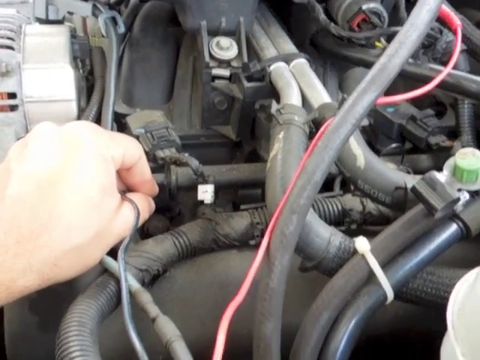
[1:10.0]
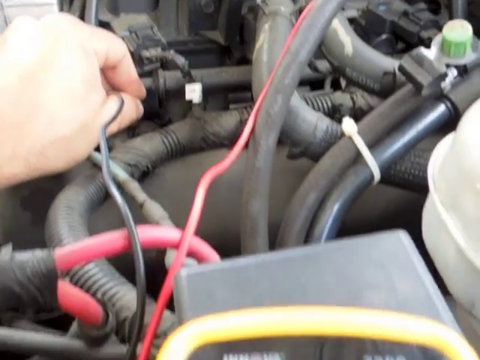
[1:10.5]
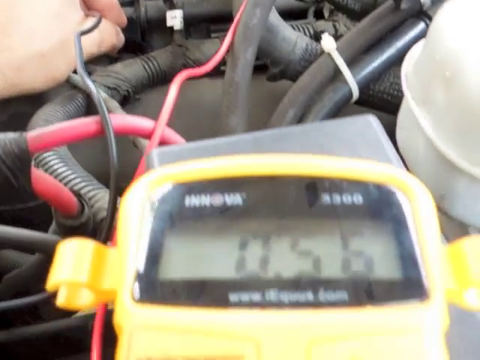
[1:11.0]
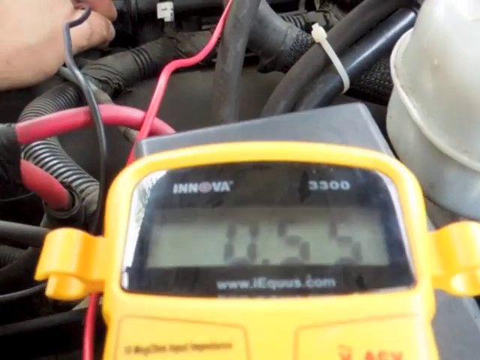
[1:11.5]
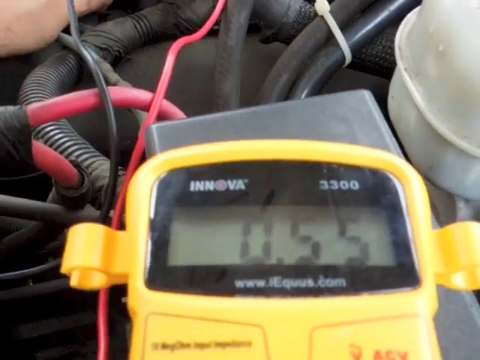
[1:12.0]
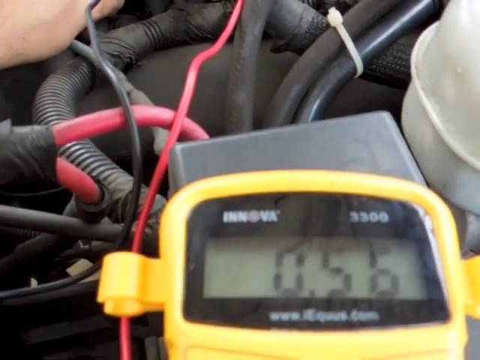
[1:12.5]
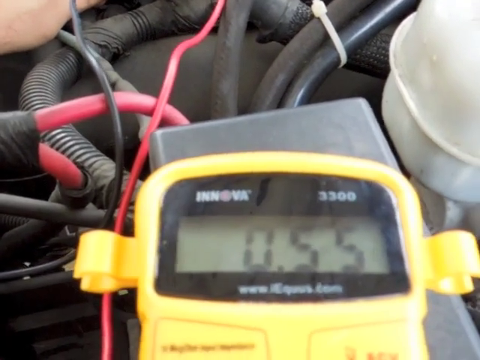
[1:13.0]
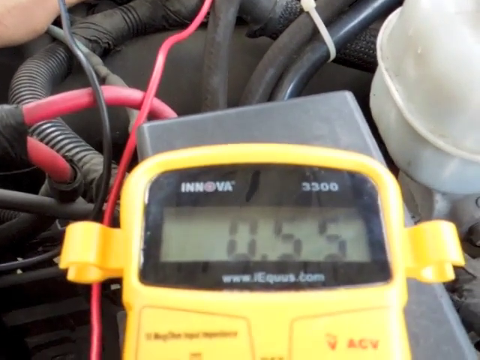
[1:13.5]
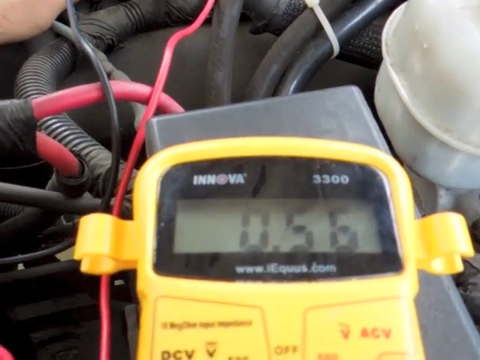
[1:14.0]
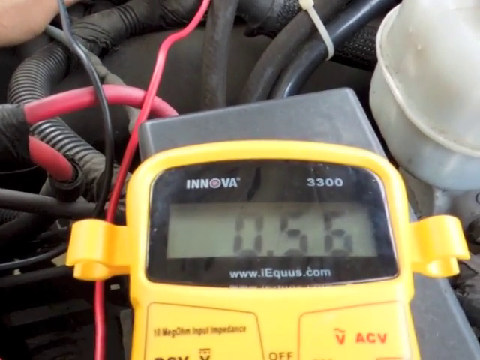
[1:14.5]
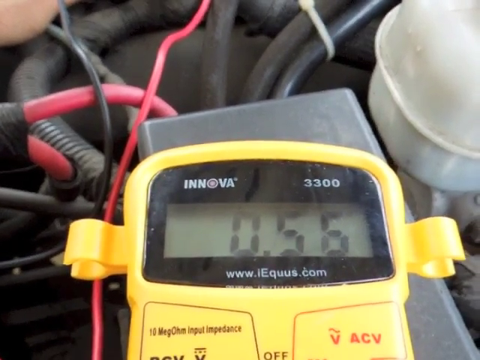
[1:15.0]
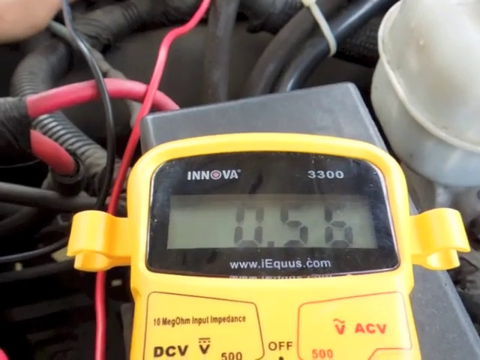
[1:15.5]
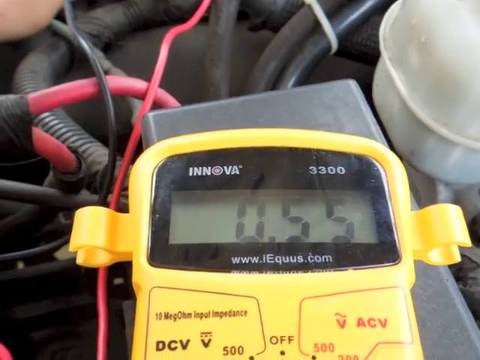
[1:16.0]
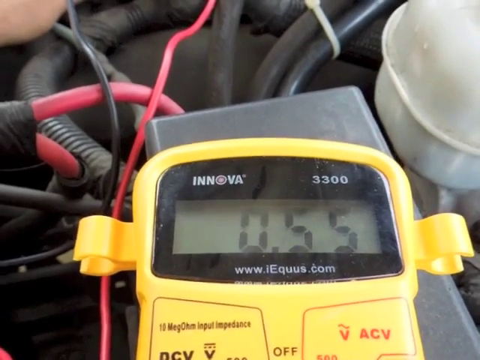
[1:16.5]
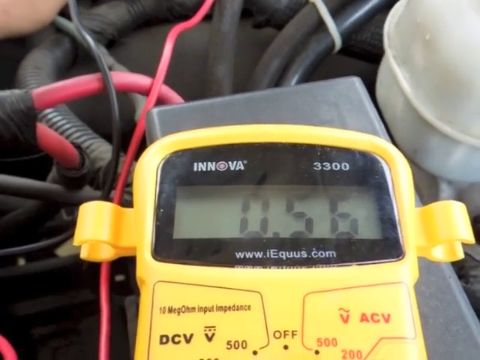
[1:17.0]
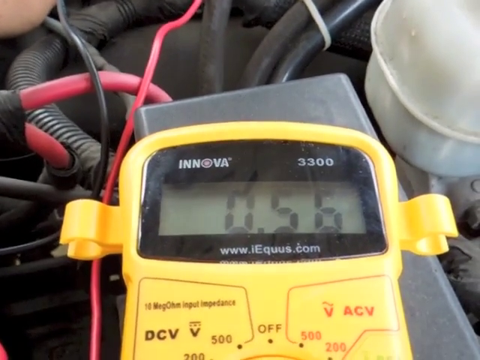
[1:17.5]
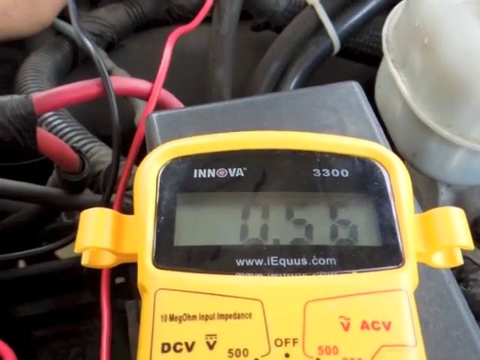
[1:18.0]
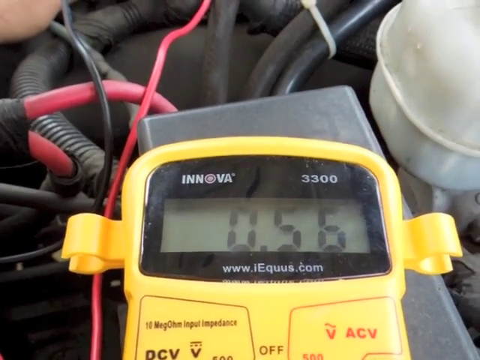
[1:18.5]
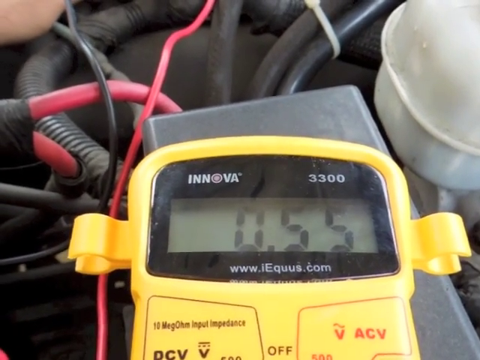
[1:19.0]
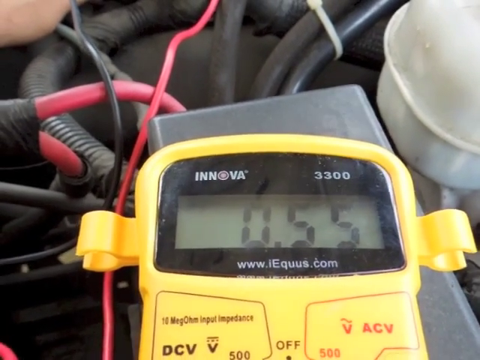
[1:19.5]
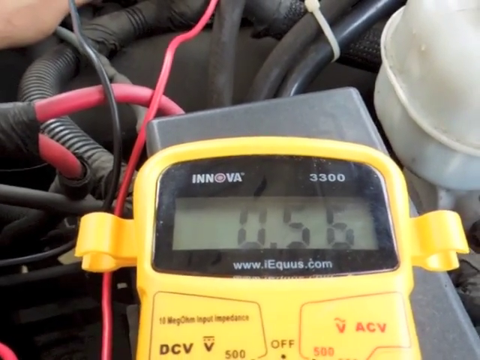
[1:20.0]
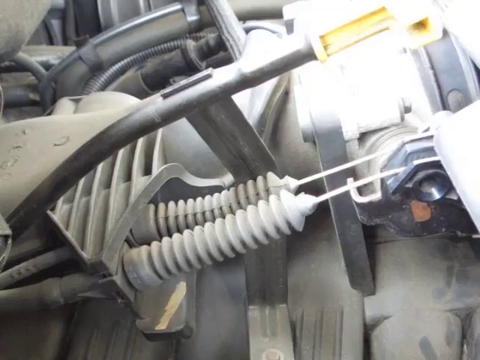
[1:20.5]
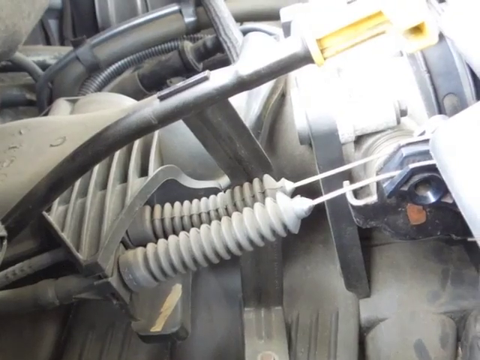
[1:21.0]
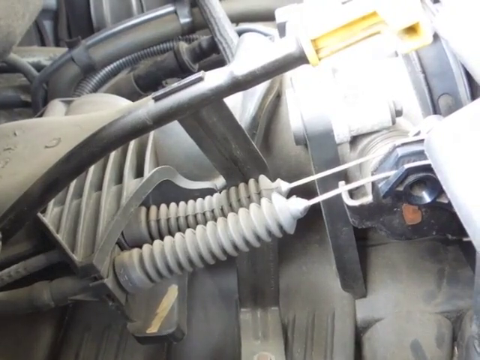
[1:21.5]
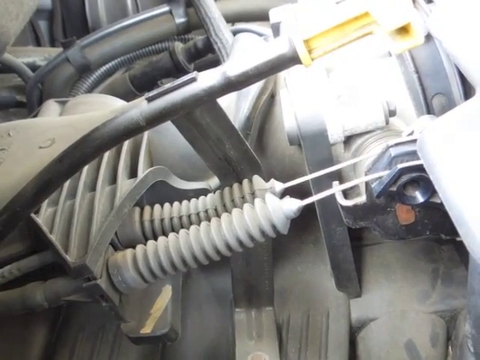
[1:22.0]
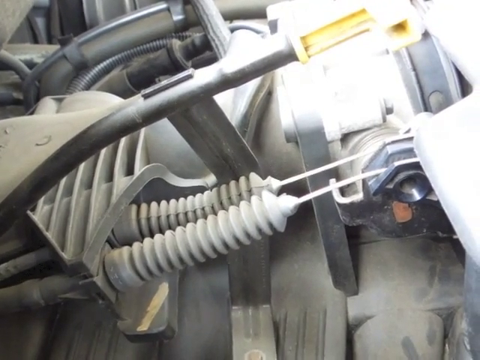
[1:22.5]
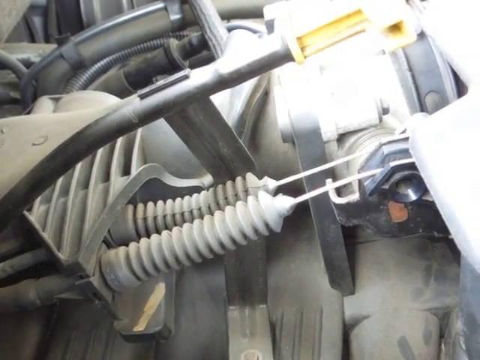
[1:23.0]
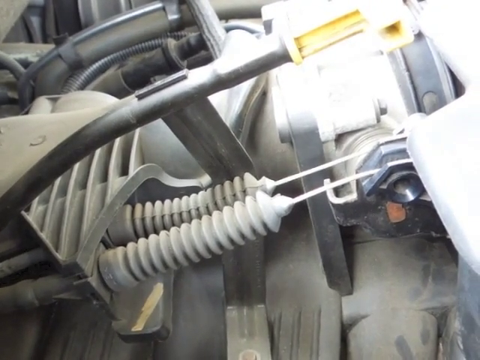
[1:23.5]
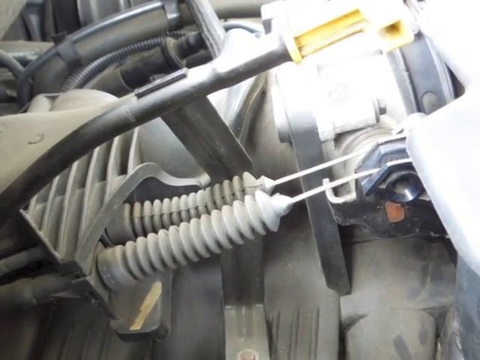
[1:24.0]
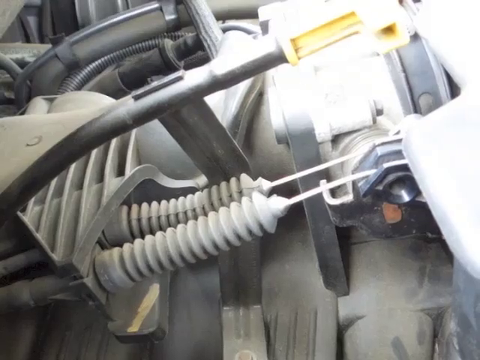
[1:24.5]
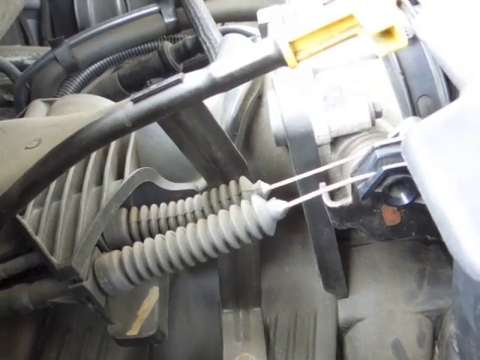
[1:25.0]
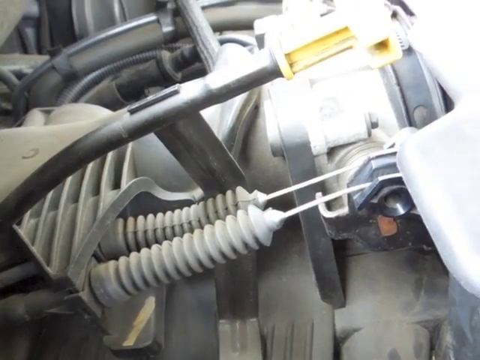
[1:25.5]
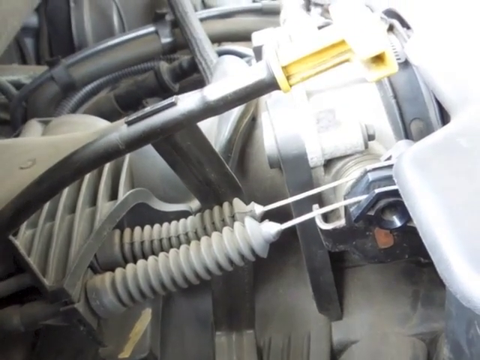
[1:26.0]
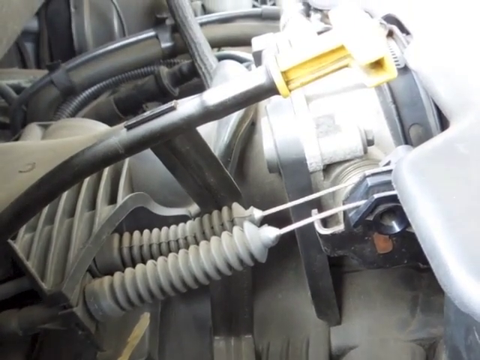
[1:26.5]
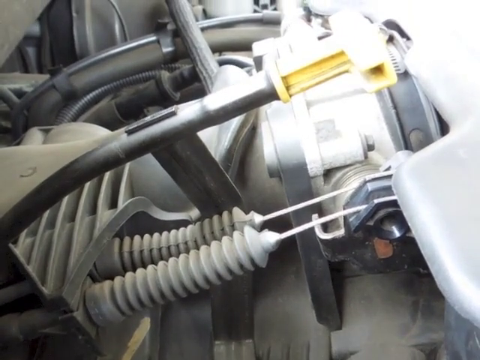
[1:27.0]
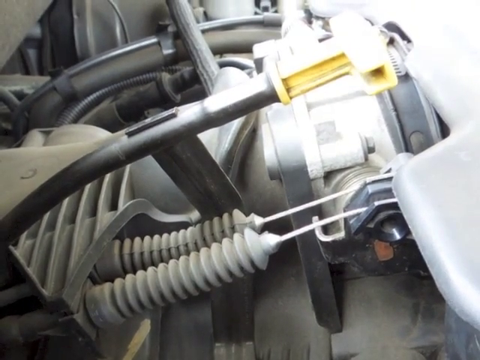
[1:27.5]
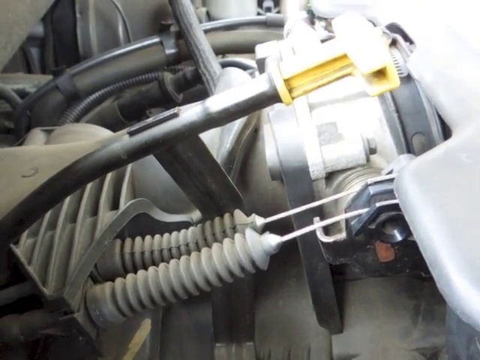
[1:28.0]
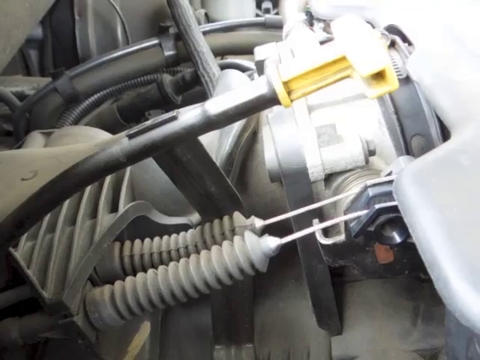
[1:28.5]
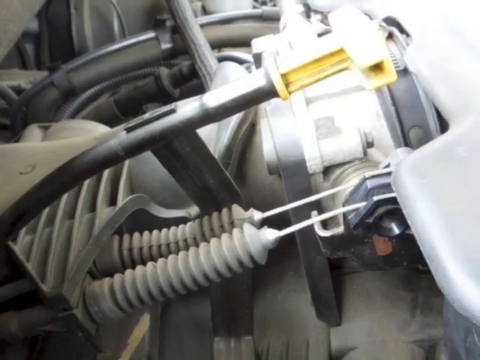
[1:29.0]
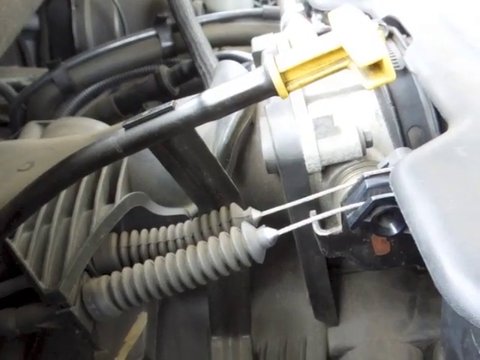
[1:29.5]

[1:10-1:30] An electrical circuit in the engine is being tested with an "INNOVA 3300" multimeter. The mechanic has the red probe touching the center wire of a connector near the air cleaner cover and the black probe touching the metal frame of the vehicle in the engine area. The digital readout shows 0.55 with the meter set at 20 under DCV, rising to 0.56 and back down to 0.55. The view then changes to a side view from a different angle into the engine compartment, very near the steering column, showing various cables with rubber accordion boots and, in the center, items associated with the steering column. The camera pans upward to show additional cables and connectors deeper in the engine area toward the top of the screen. At the very end the view pauses on this area near the steering column, with numerous hoses and cables coming through the firewall from the passenger compartment into the engine.